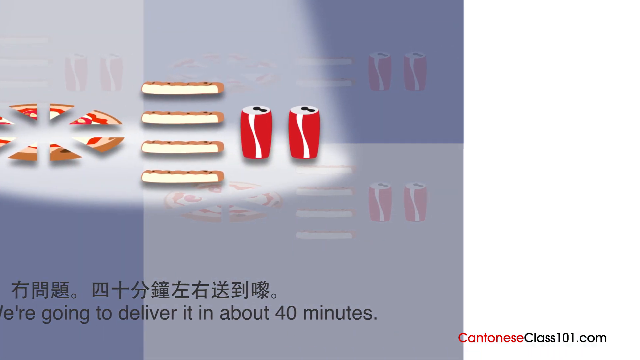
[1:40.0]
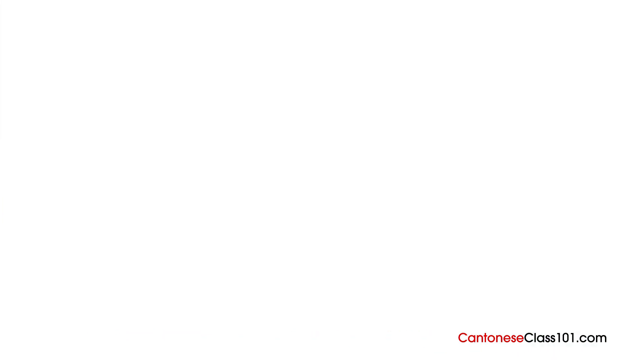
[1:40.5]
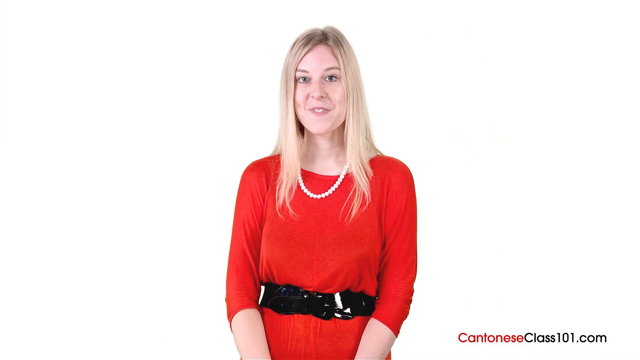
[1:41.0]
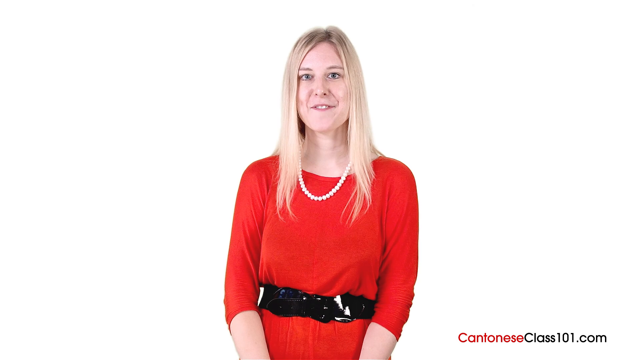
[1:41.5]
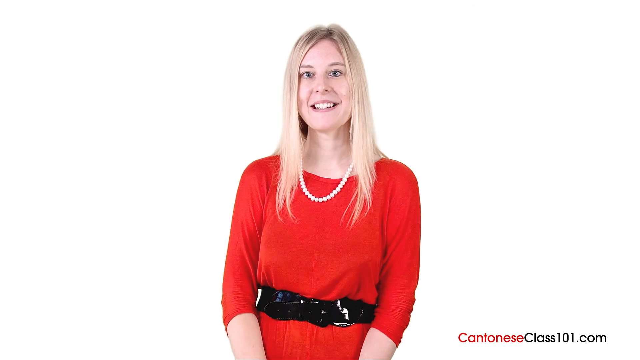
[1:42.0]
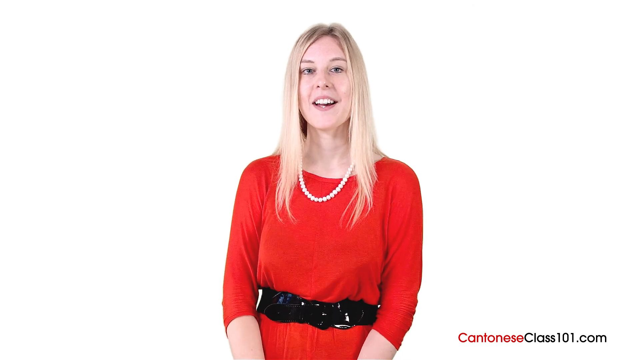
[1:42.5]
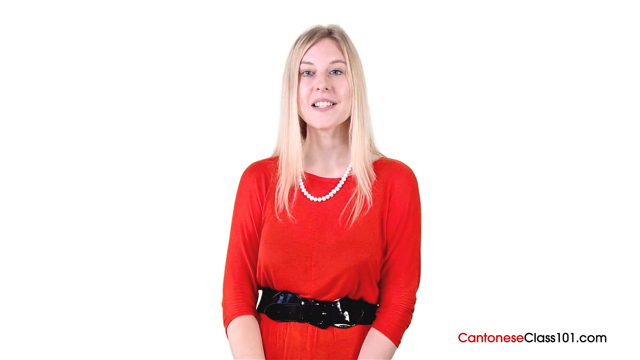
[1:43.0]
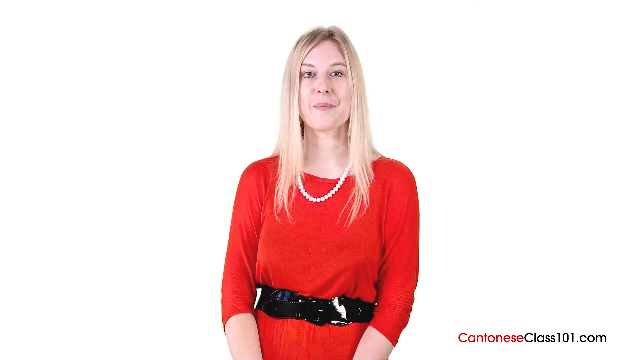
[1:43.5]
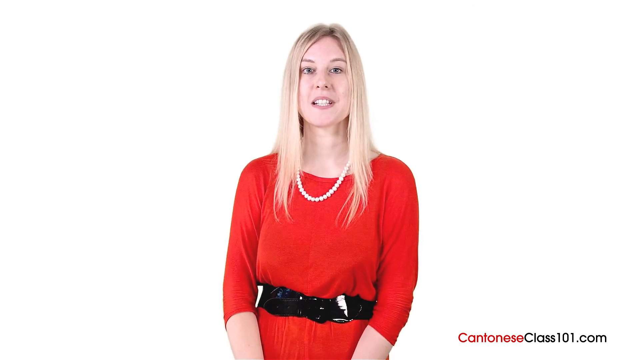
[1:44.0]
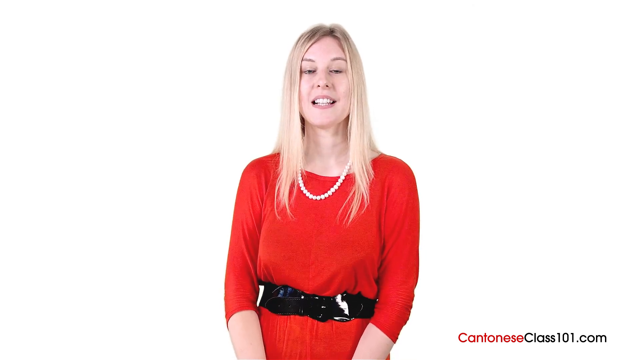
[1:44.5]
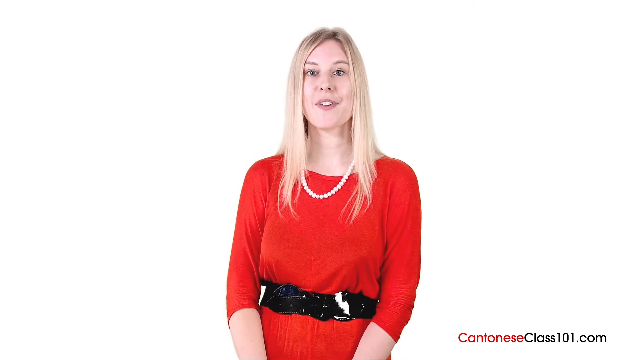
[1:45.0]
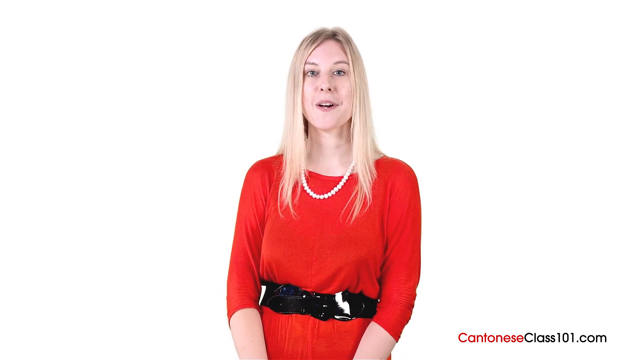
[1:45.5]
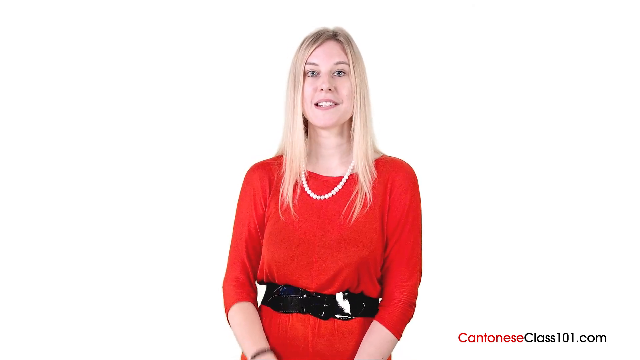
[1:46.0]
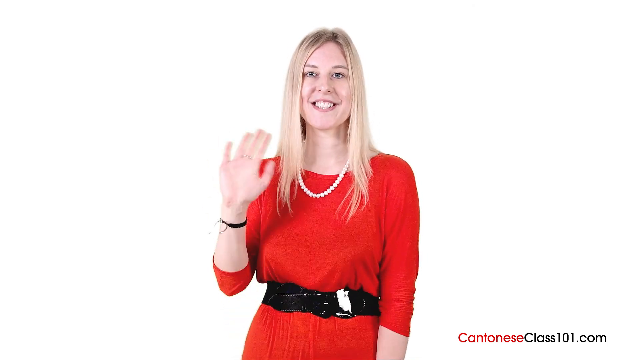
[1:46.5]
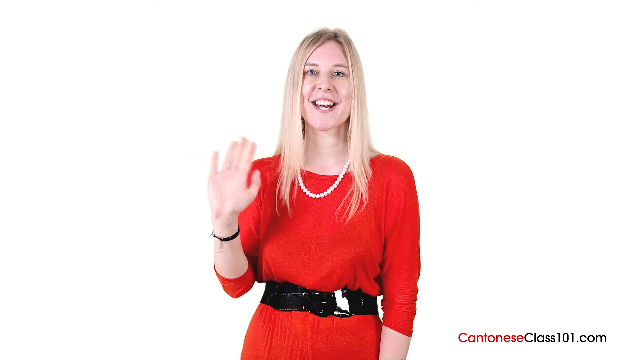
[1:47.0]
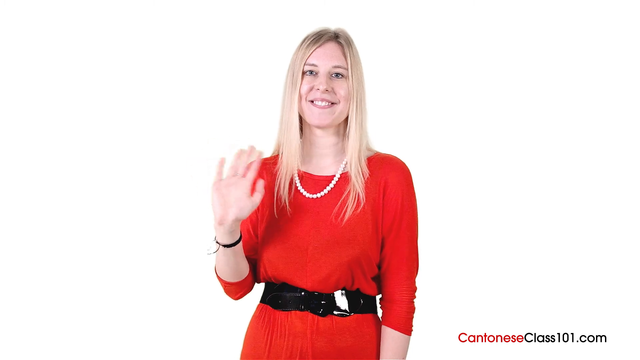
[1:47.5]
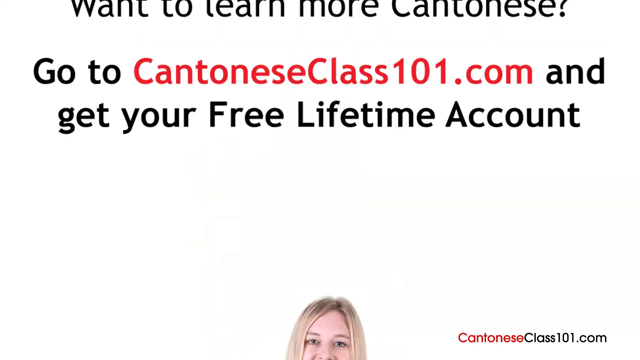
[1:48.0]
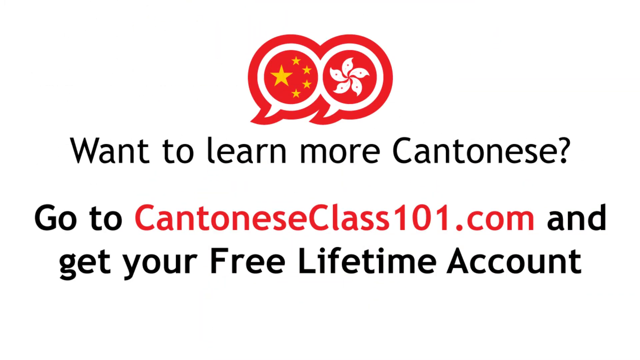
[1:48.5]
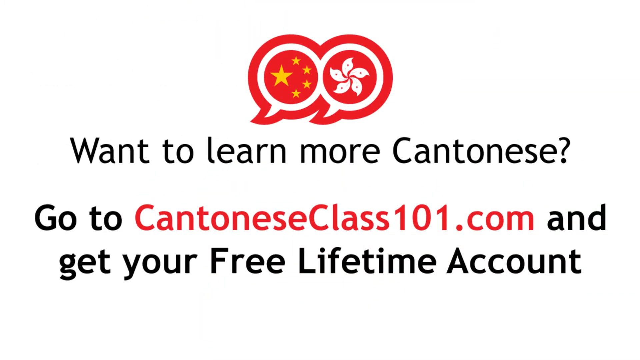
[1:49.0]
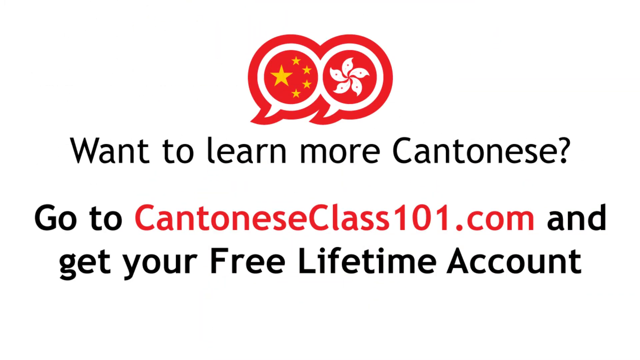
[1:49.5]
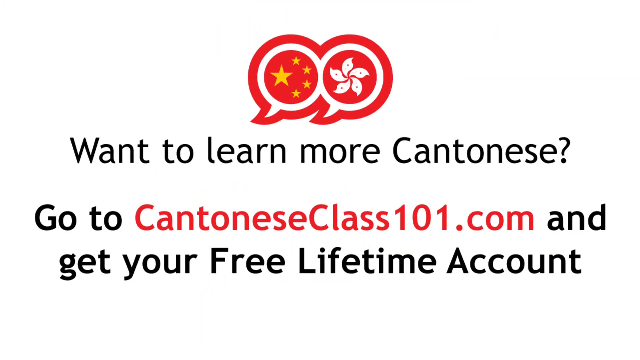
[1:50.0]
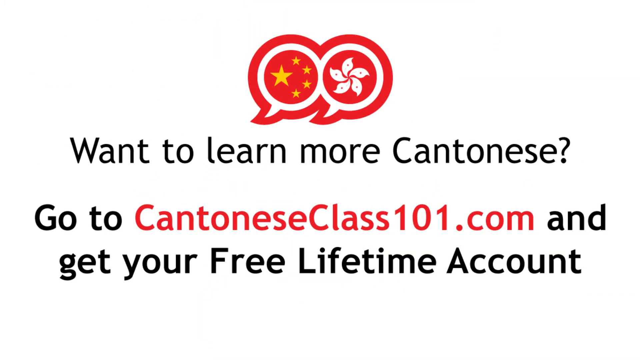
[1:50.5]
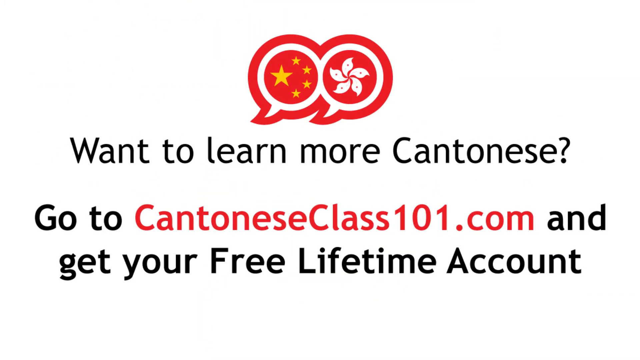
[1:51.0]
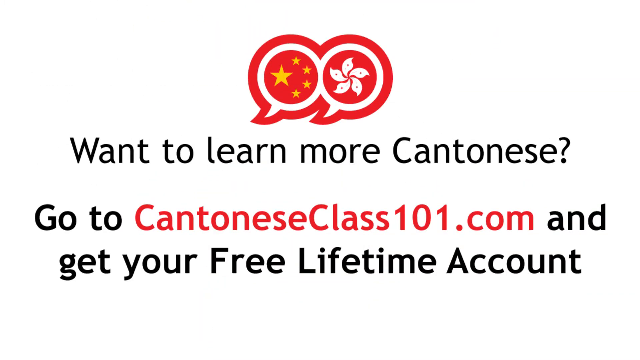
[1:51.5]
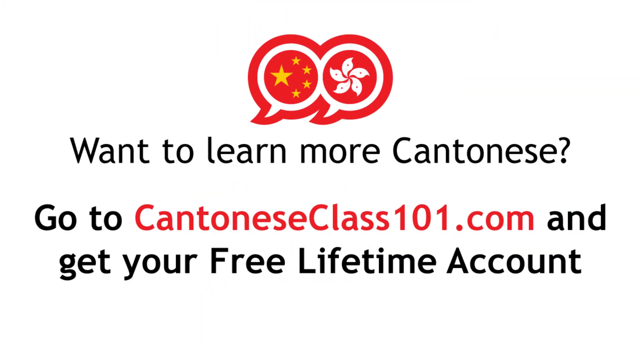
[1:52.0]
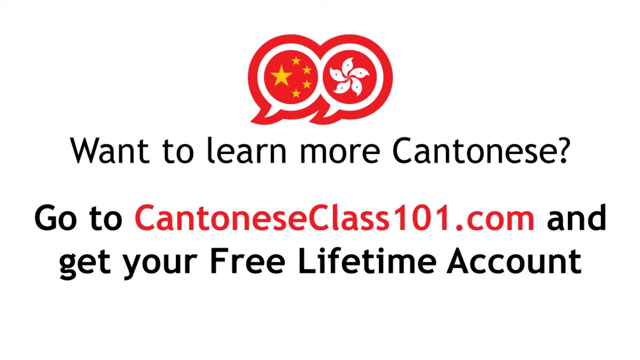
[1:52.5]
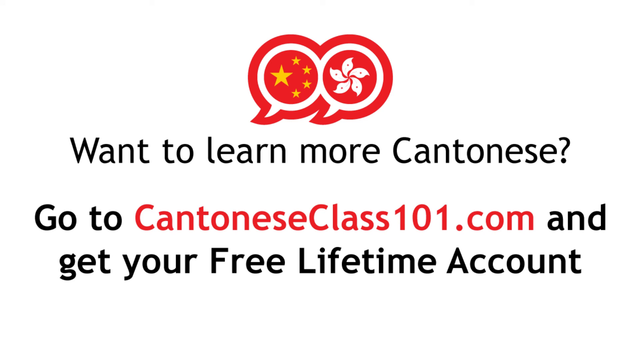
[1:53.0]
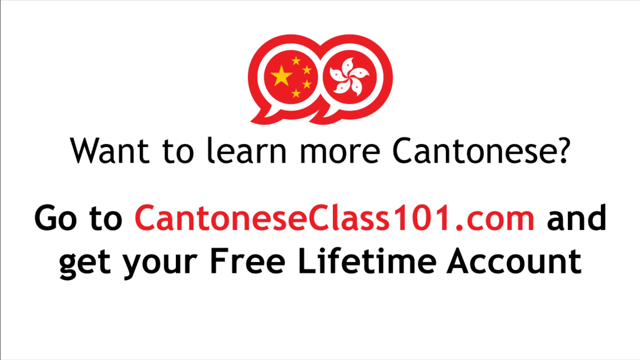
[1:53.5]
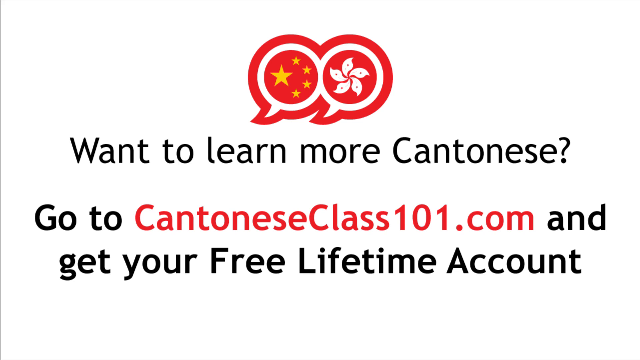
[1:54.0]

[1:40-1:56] The icon for the customer's order, a pizza cut into eight slices with four breadsticks and two cans of coke, is zoomed in onto the screen. The scene then changes to a beautiful blonde woman wearing a pearl necklace and a red long-sleeve shirt. She seems to be speaking, and then waves goodbye with a big smile. A logo appears on screen reading "Want to learn more Cantonese? Go to the Cantonese class 101.com and get your free lifetime account."